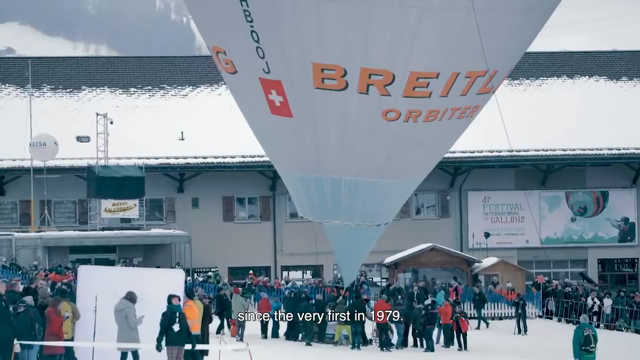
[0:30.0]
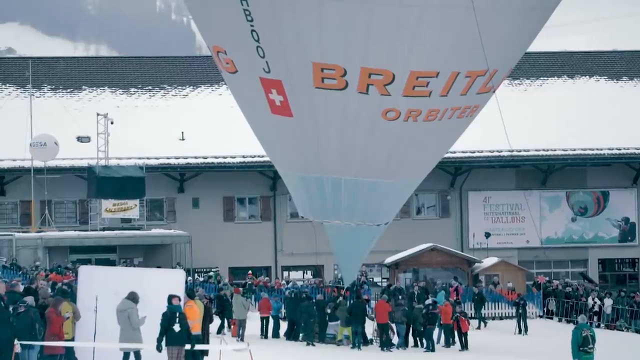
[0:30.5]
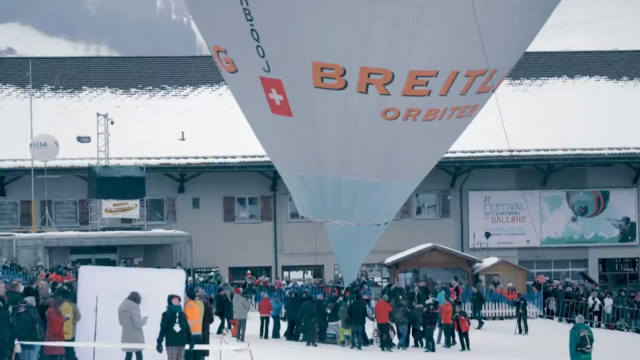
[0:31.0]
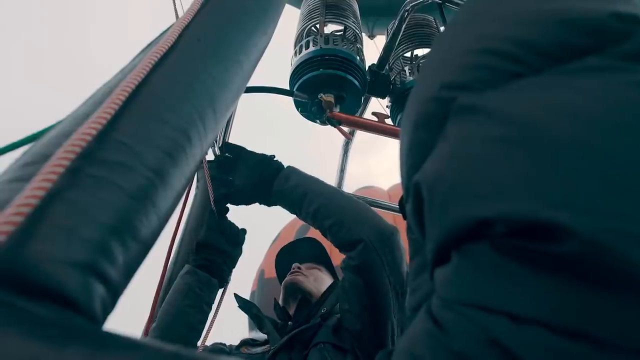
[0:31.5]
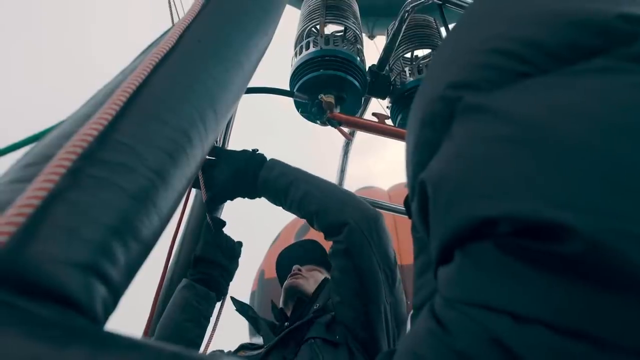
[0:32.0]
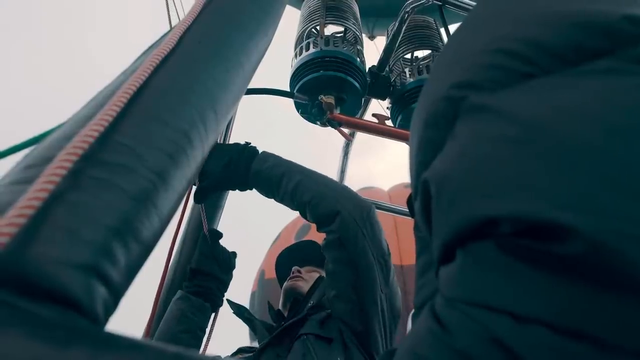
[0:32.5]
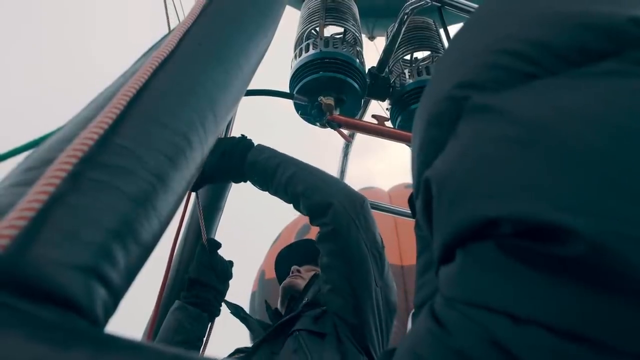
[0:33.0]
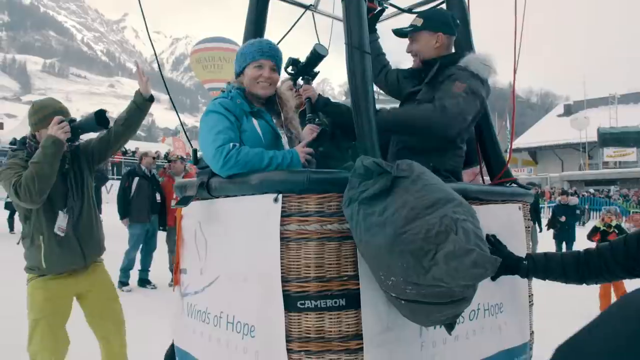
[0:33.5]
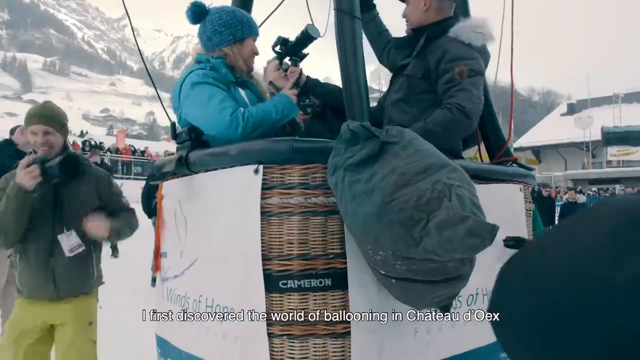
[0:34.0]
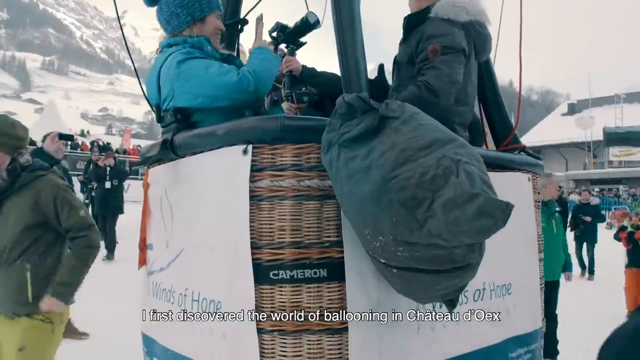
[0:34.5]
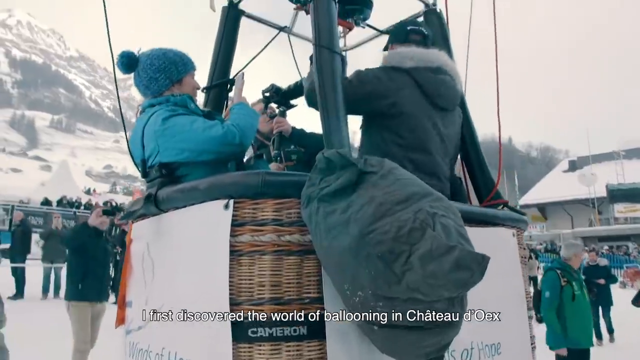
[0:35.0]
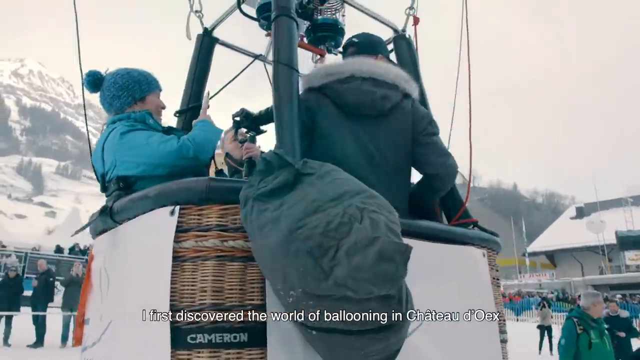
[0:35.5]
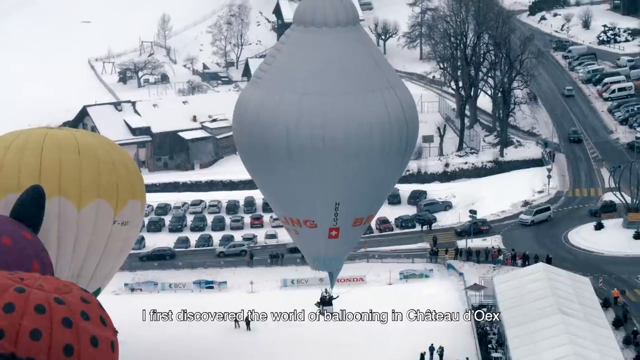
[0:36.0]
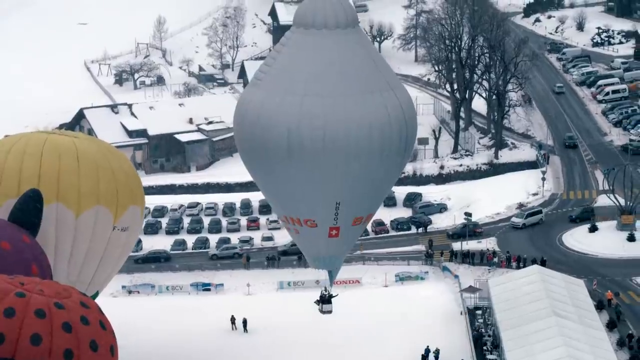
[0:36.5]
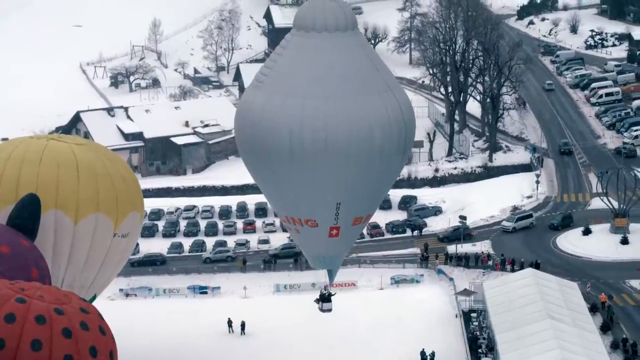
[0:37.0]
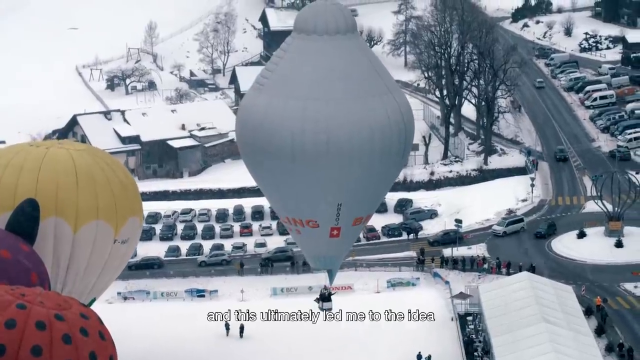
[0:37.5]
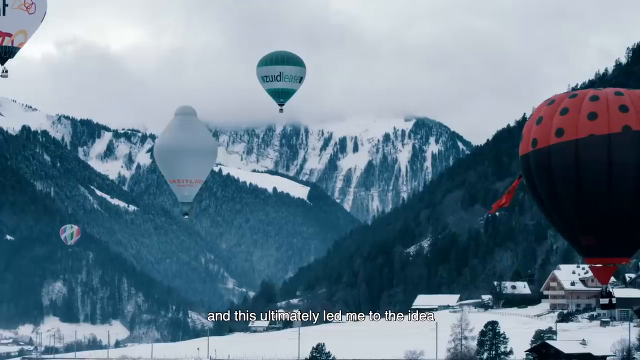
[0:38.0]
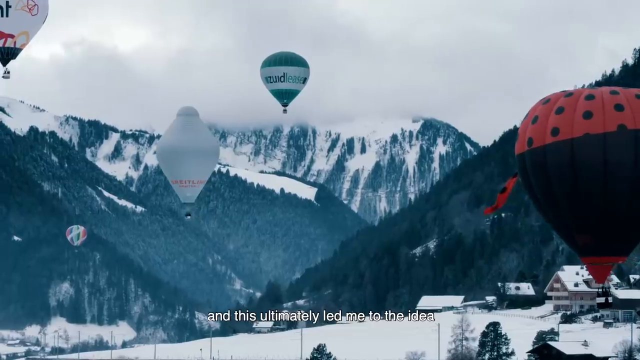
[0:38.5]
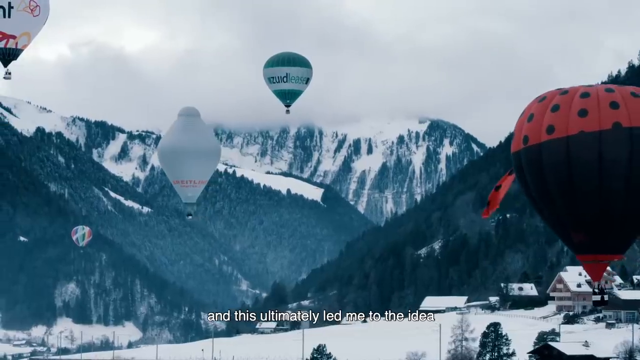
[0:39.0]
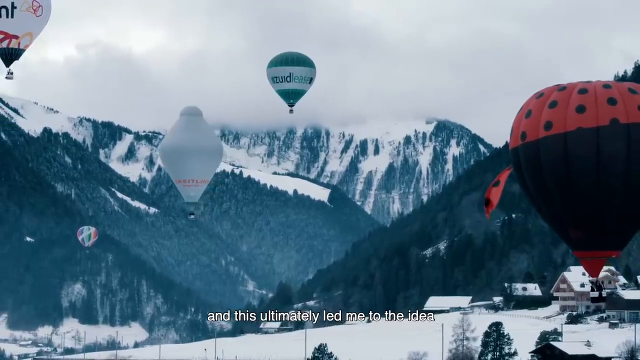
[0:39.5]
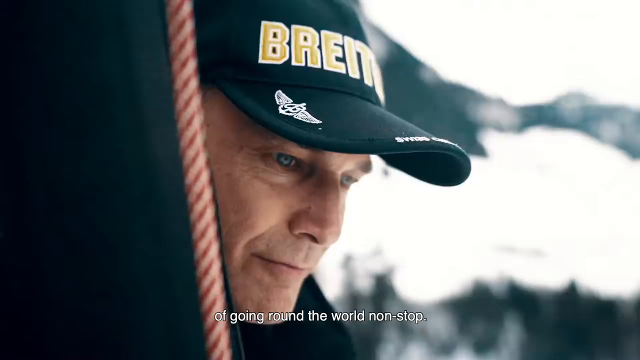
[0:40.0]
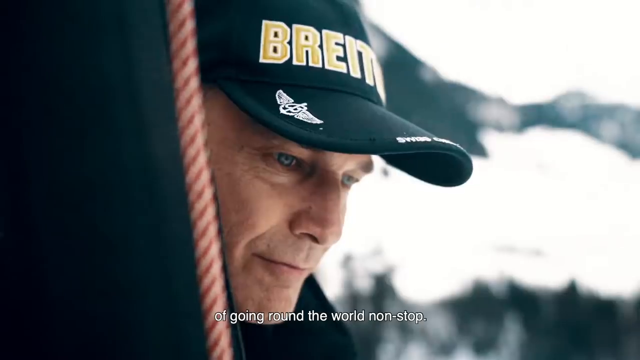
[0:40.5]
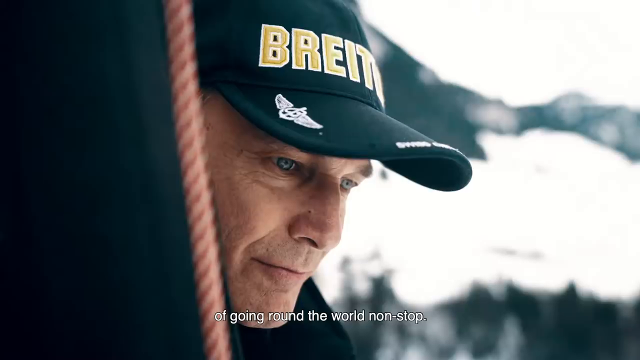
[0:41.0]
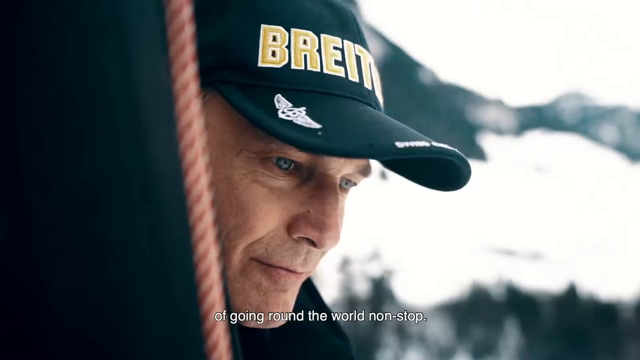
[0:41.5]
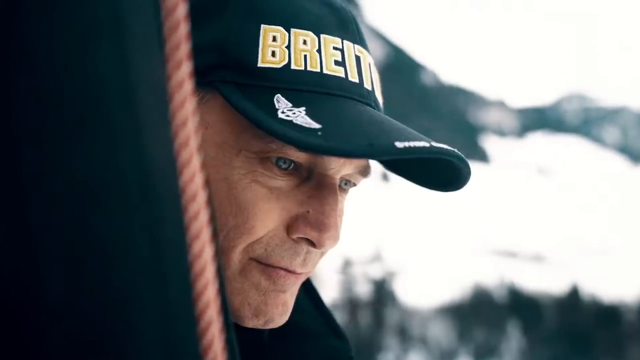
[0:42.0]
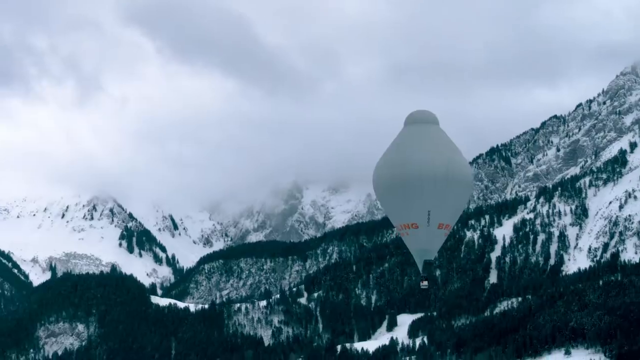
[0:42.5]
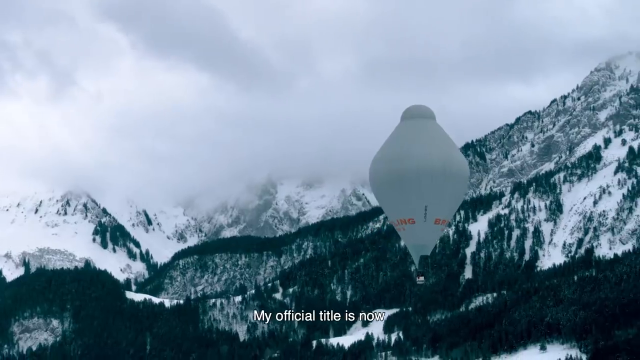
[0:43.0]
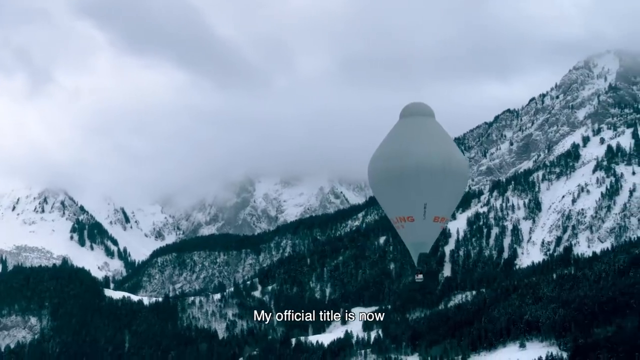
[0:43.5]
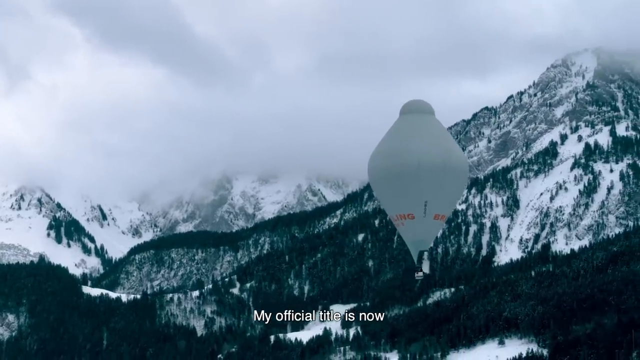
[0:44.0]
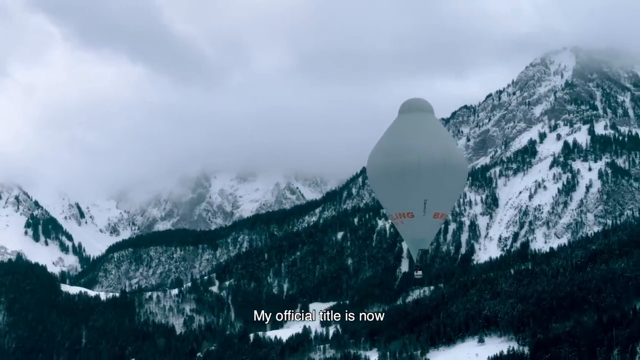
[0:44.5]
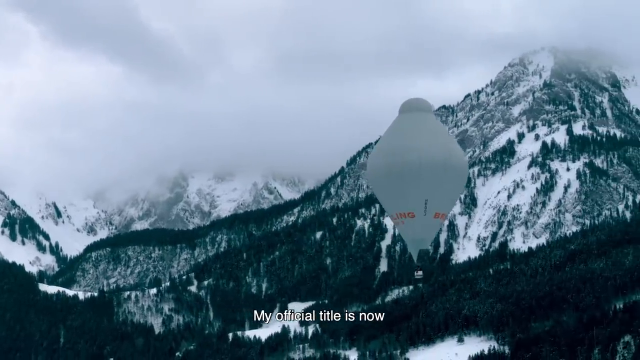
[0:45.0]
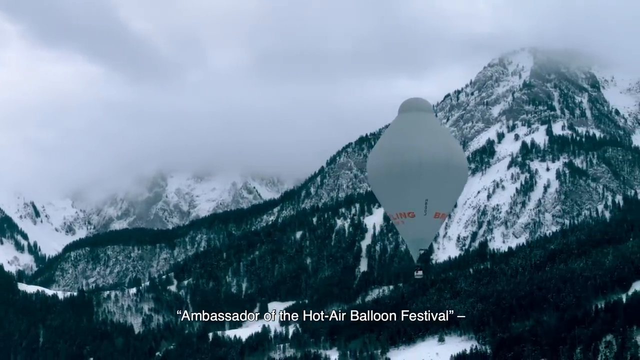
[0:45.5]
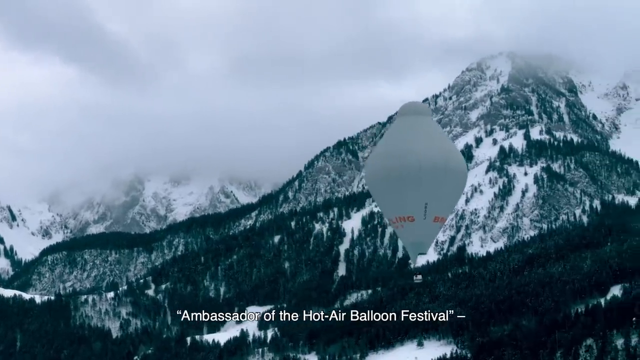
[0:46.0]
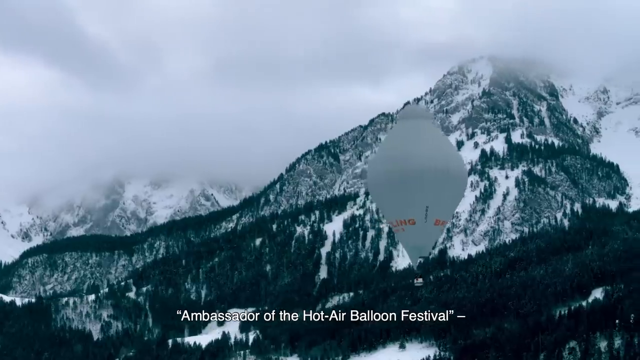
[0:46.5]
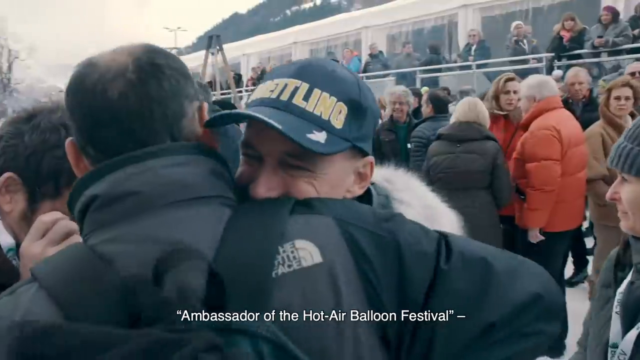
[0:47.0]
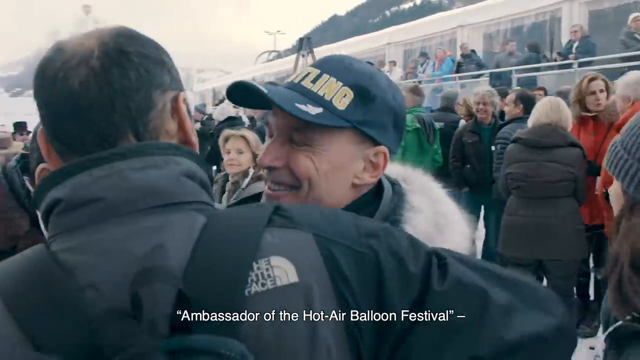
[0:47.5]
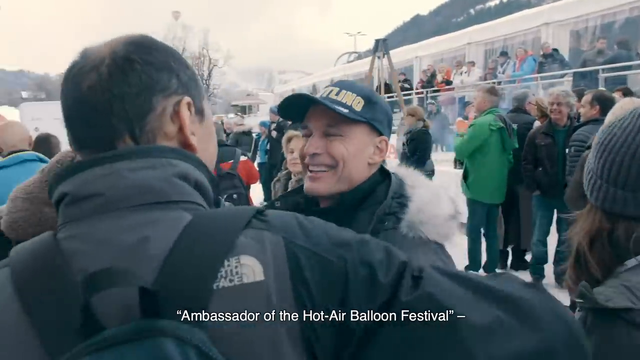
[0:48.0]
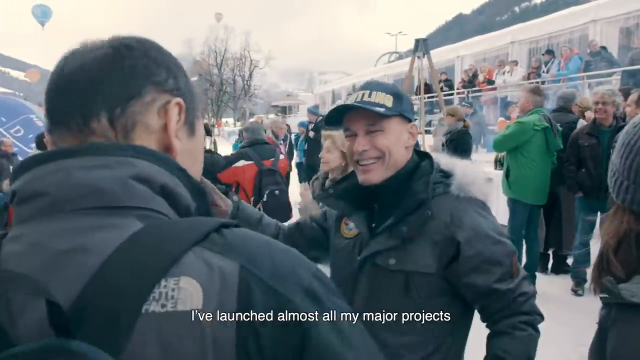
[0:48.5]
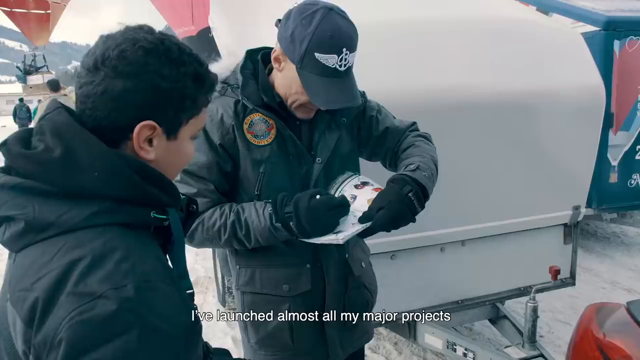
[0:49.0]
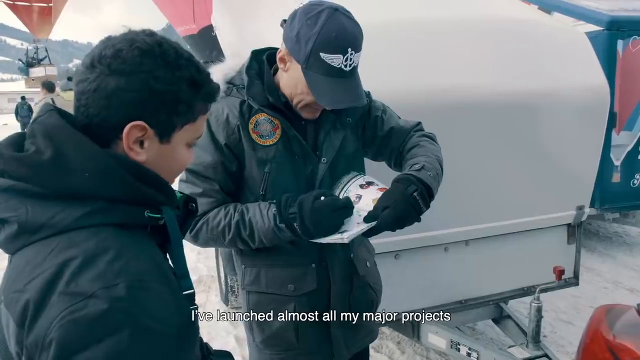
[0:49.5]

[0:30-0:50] A white balloon with orange writing on it appears; the writing cannot be made out. The balloons are all shaped differently. A close-up of the white balloon shows how it works: people are lighting it and pulling on the strings on the inside of it to lift it up into the air. Captions appear on screen, but they are not legible. Several other types of balloons float around with it against a backdrop of a mountain, trees and snow. After a few more balloons float by, the man interviewed earlier appears; he looks like he may have been a former army member. He is the ambassador of the Hot Air Balloon Festival, and he is signing something, apparently an autograph. He looks satisfied and proud.